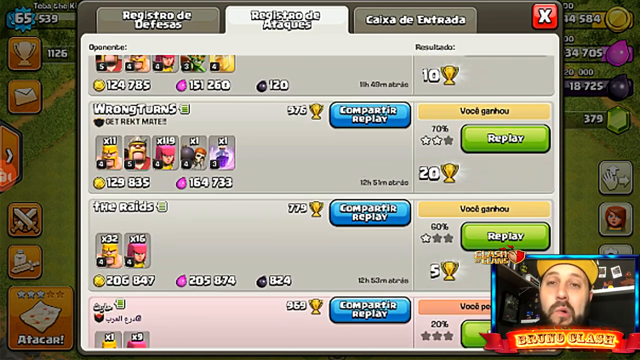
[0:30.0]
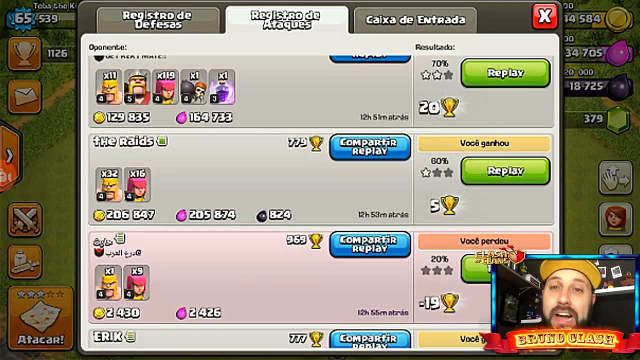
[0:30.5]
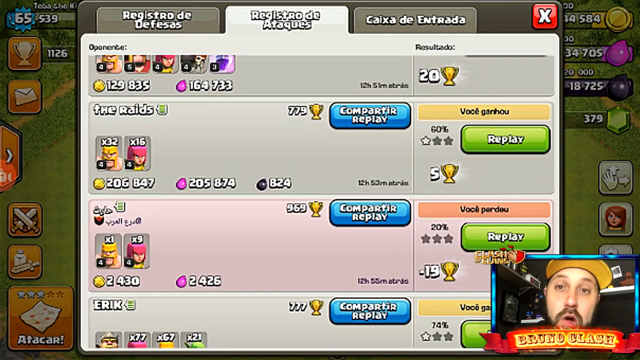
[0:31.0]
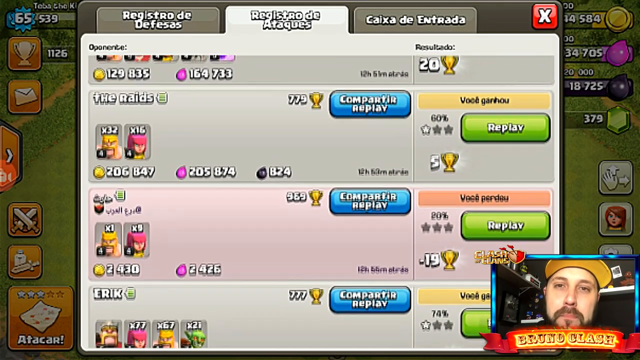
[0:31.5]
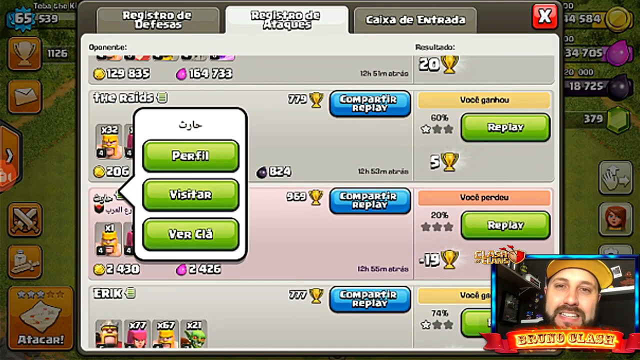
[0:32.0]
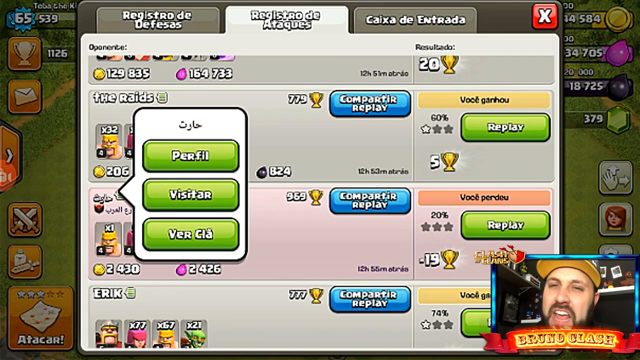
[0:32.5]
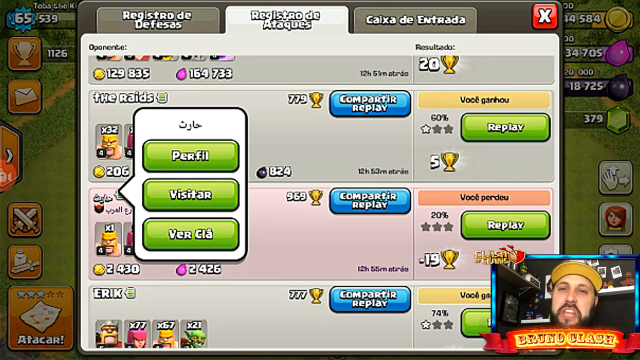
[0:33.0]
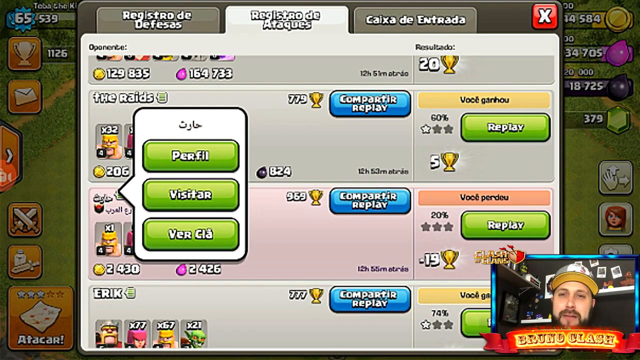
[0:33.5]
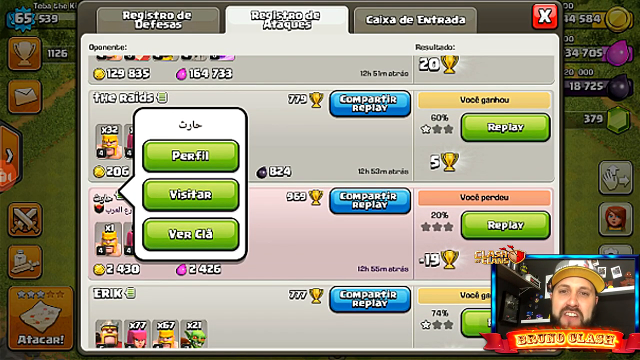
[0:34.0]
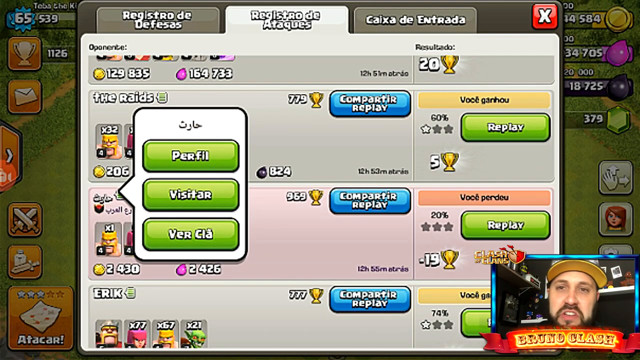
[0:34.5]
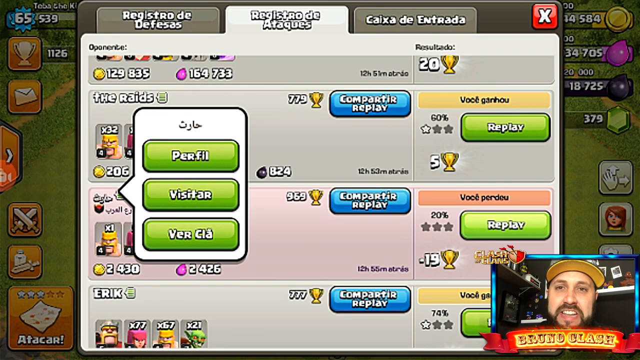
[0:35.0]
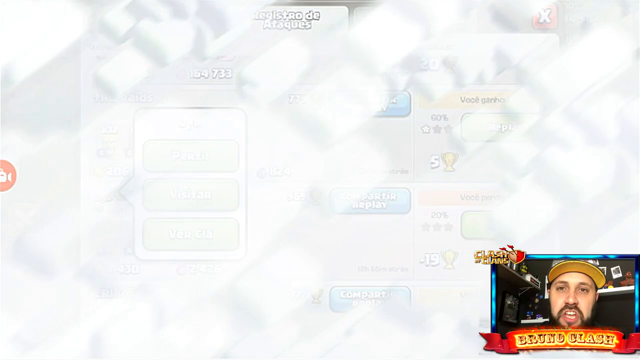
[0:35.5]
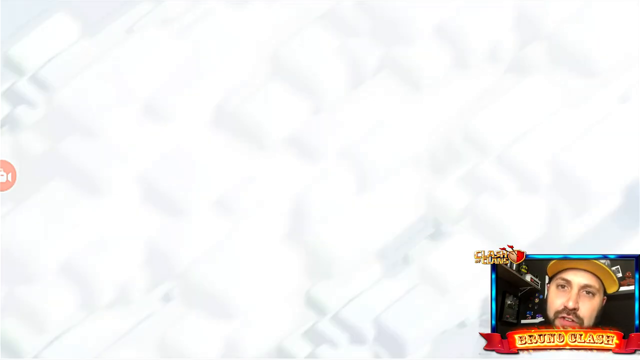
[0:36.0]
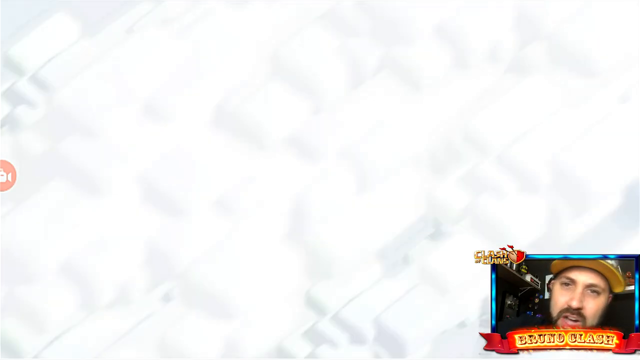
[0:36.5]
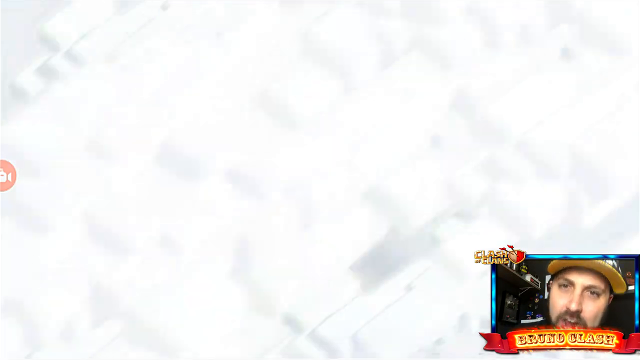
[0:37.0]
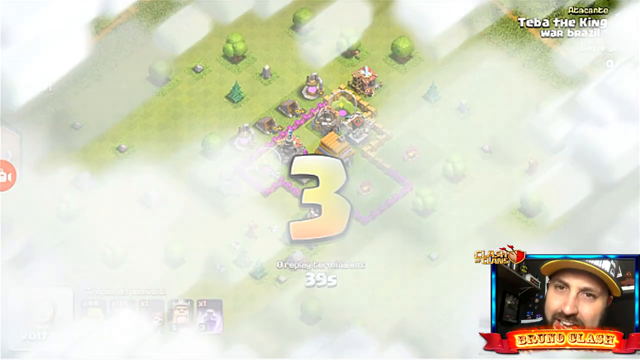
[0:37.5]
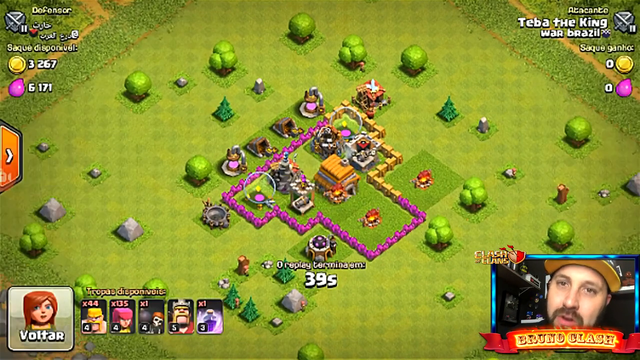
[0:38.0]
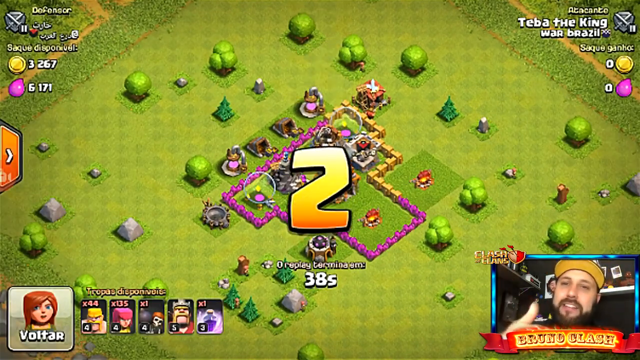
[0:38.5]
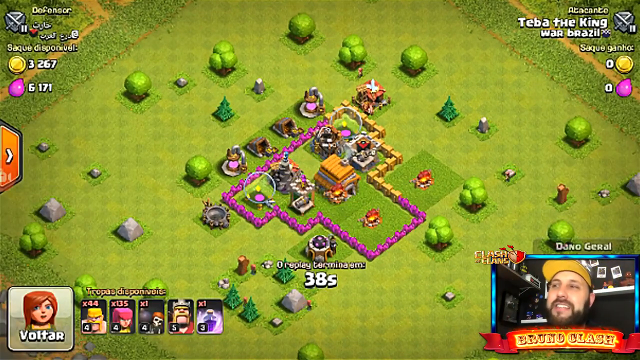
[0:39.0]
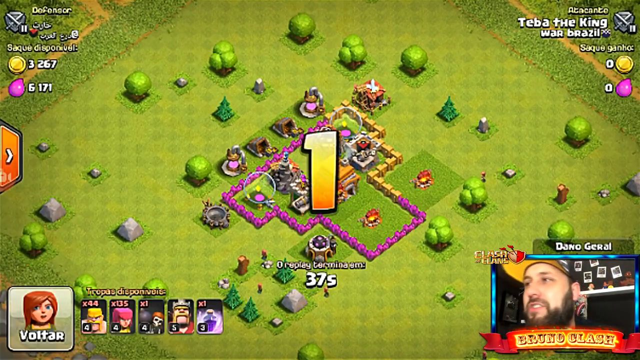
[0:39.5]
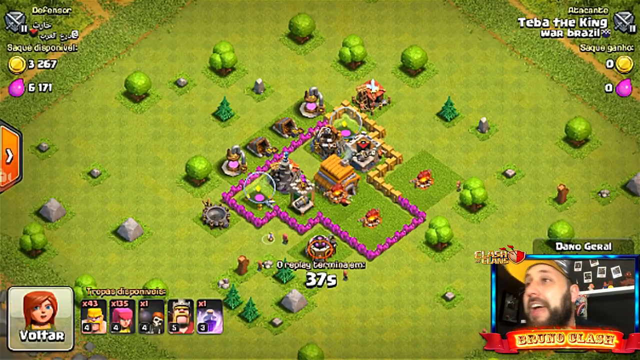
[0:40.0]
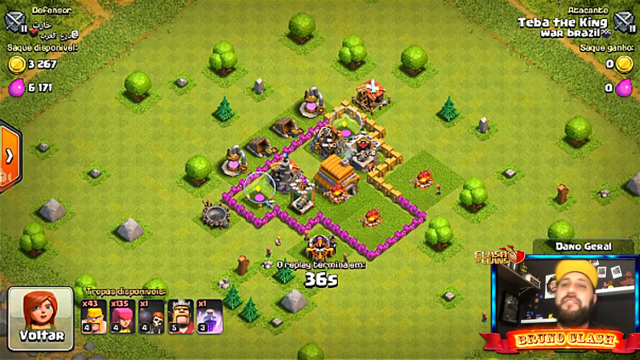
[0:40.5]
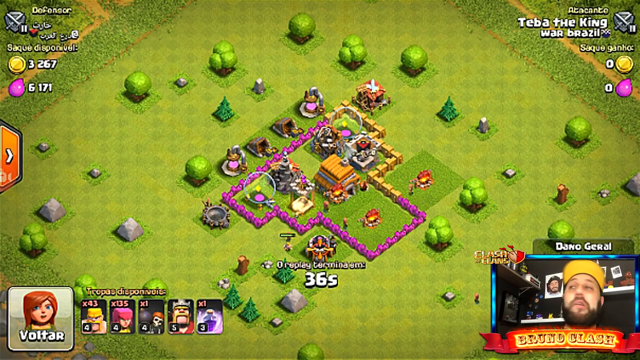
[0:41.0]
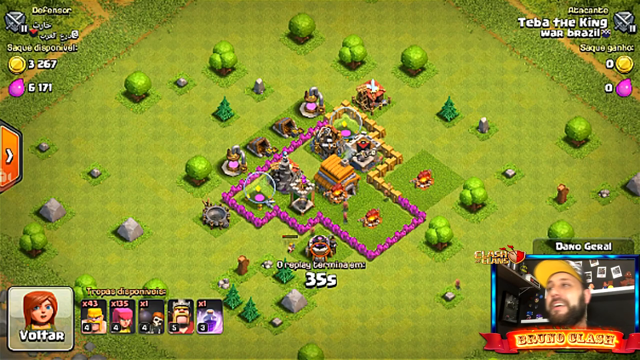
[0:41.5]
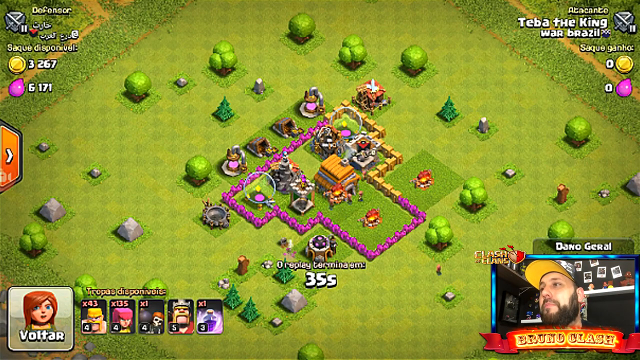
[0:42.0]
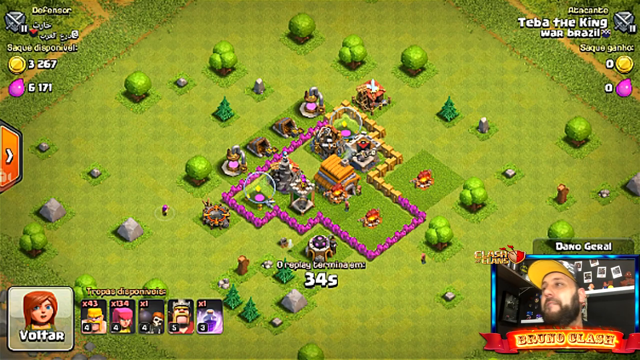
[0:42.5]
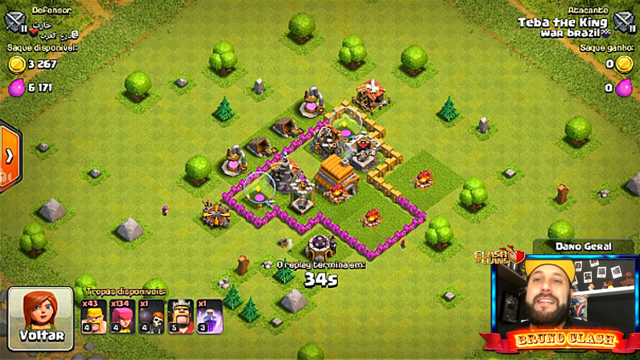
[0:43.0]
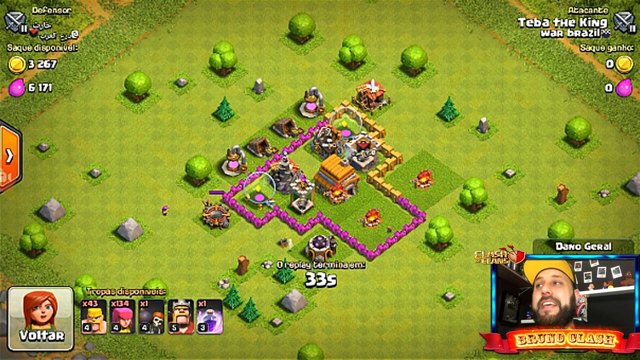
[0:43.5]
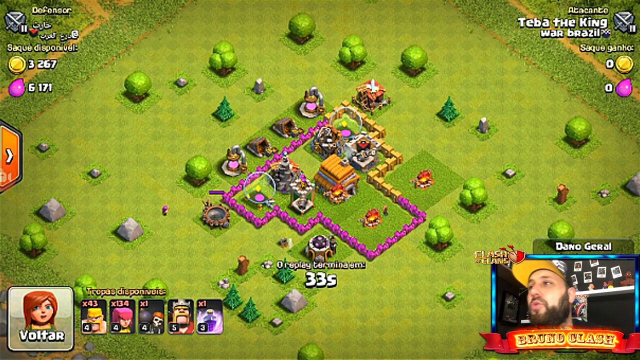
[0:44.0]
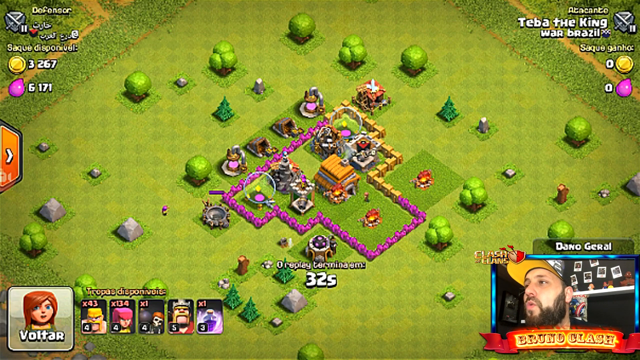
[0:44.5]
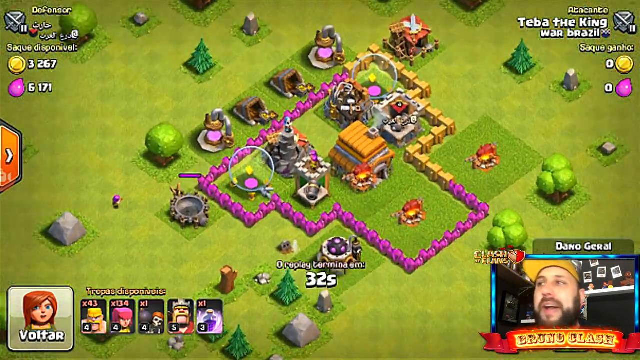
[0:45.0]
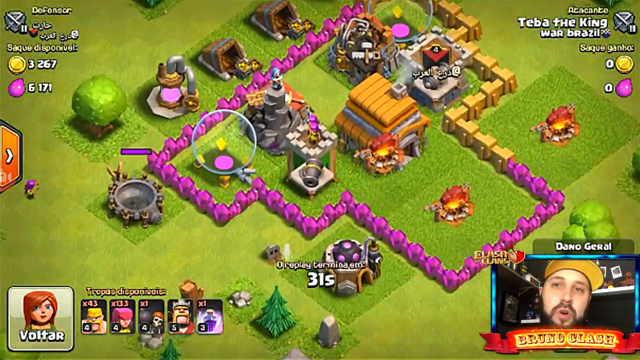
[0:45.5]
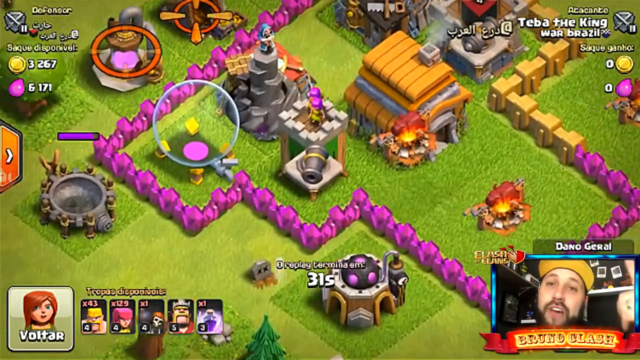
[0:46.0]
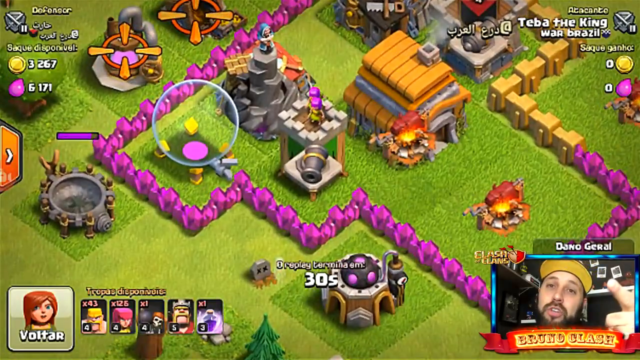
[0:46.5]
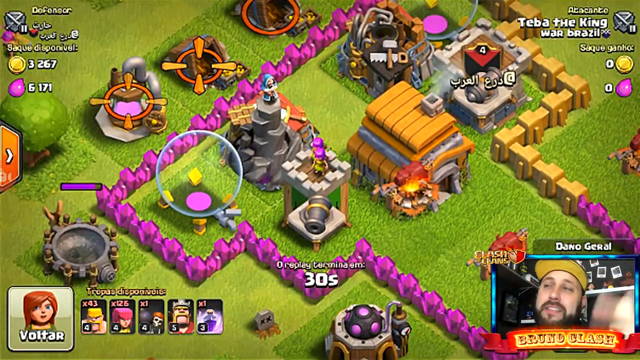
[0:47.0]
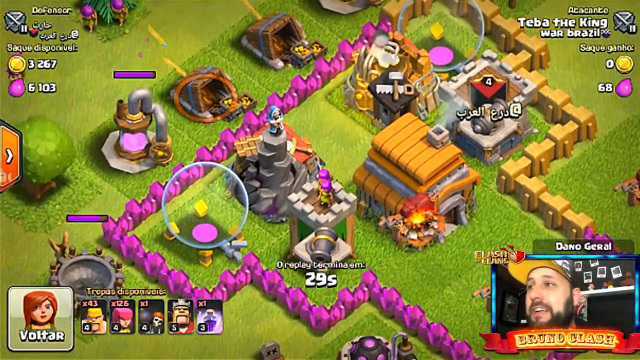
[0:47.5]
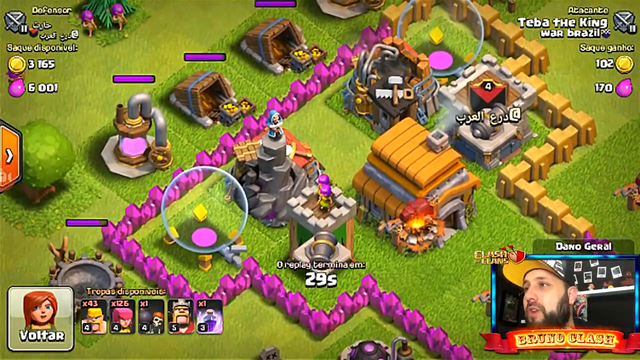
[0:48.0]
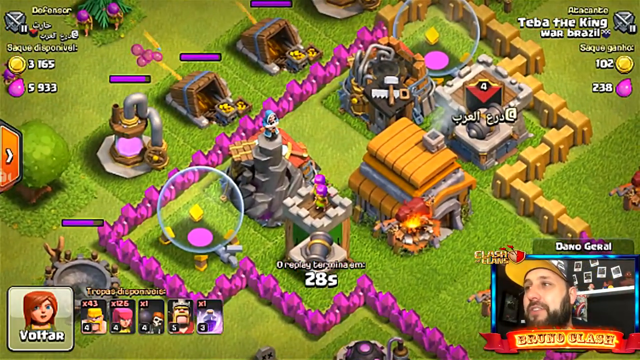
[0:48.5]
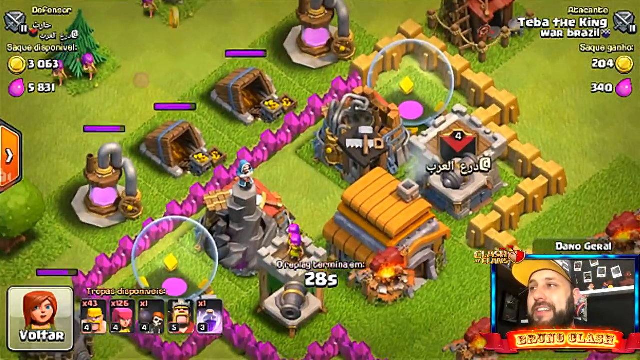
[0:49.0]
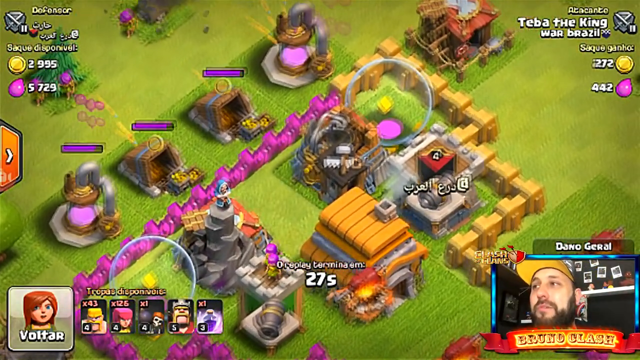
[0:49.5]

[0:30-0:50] The leaderboard is still on screen, and the man scrolls around a little before it dissolves back into the main game screen behind it. A three-two-one counter appears, and many small figures run. The view zooms in a little, and the figures seem to run inside some kind of structure, possibly a house. The view moves around, and something appears to be shooting projectiles from off-screen toward the buildings. Little coins pop up as the projectiles come in.